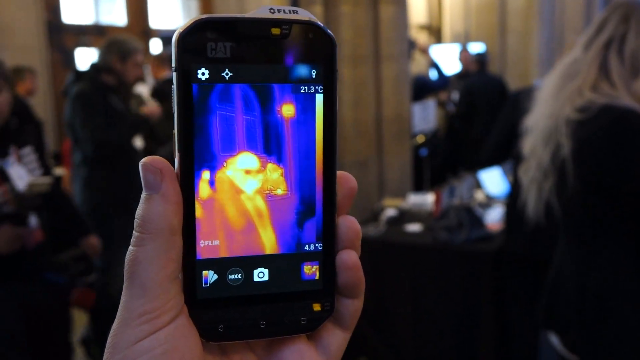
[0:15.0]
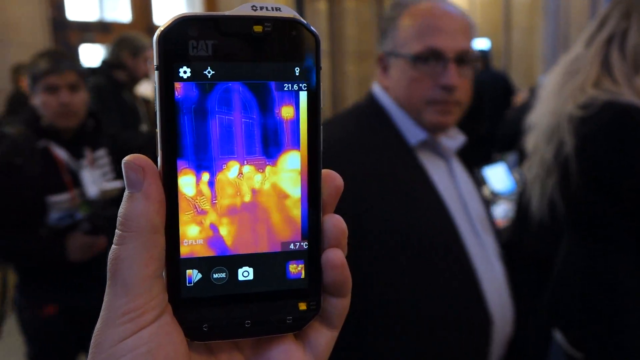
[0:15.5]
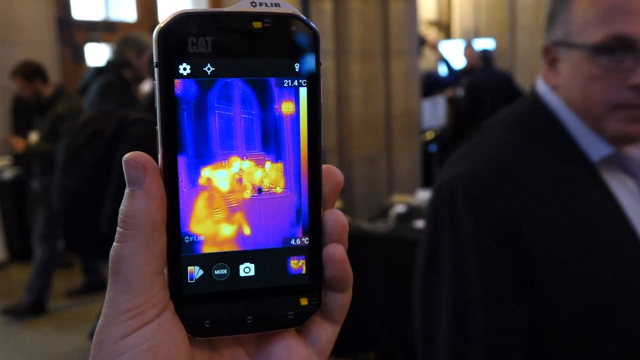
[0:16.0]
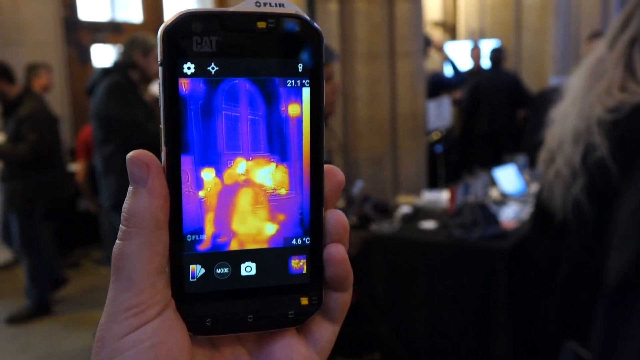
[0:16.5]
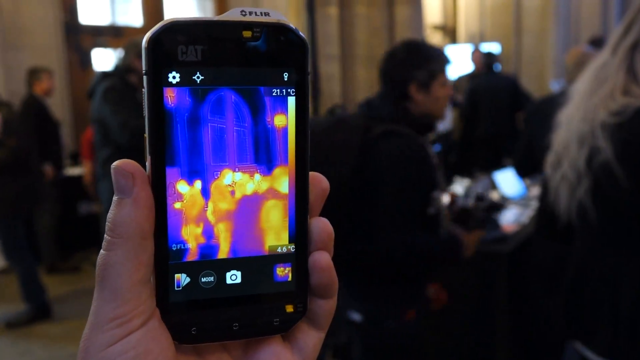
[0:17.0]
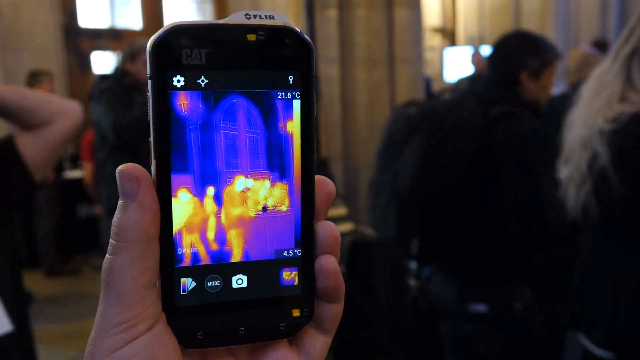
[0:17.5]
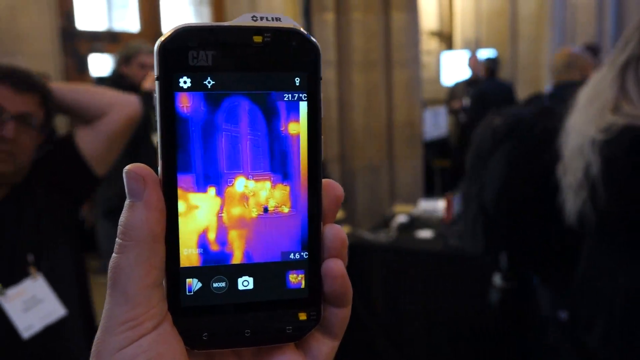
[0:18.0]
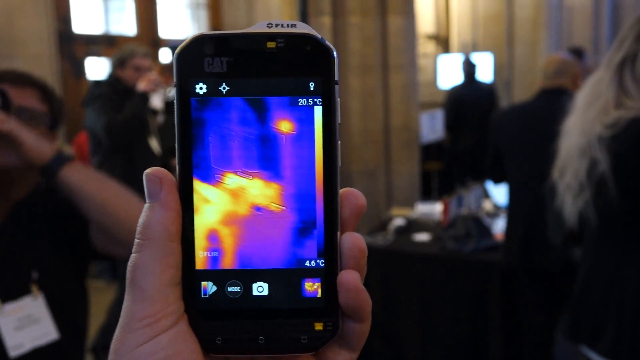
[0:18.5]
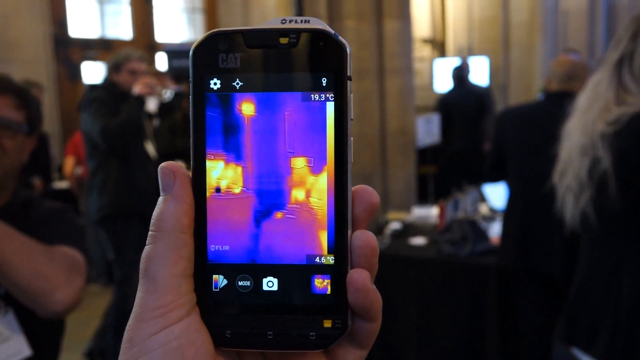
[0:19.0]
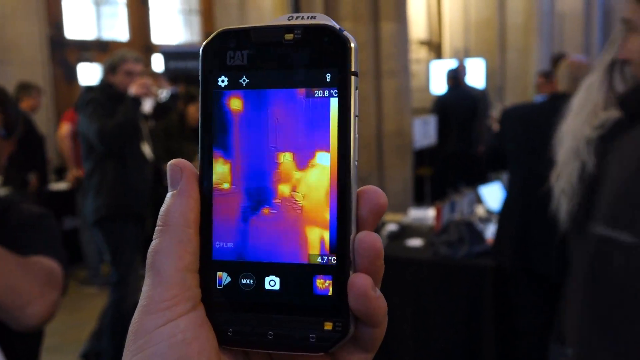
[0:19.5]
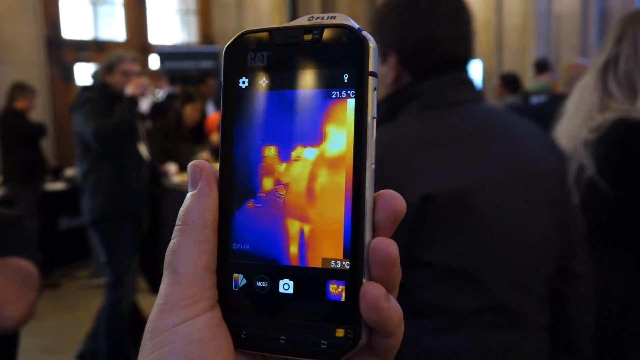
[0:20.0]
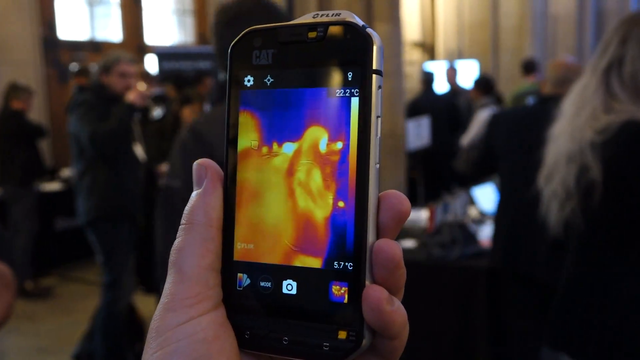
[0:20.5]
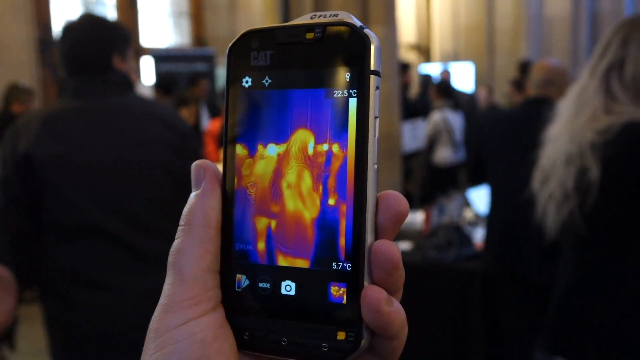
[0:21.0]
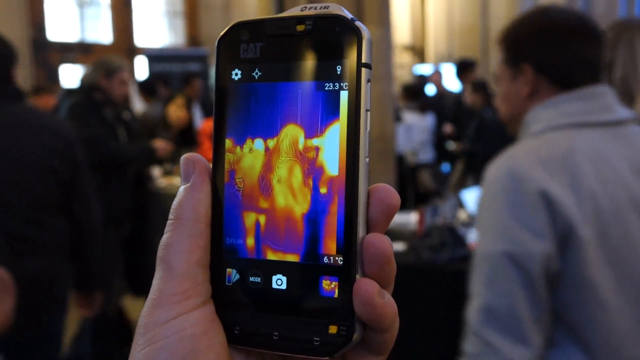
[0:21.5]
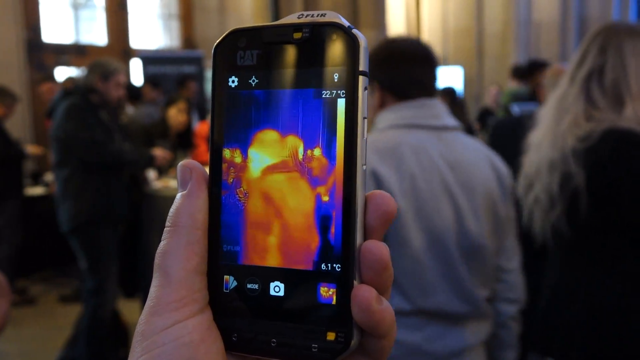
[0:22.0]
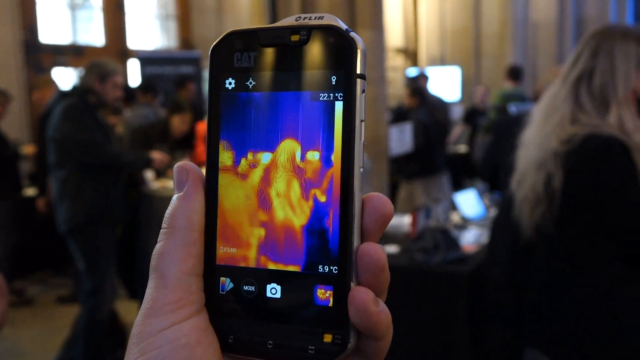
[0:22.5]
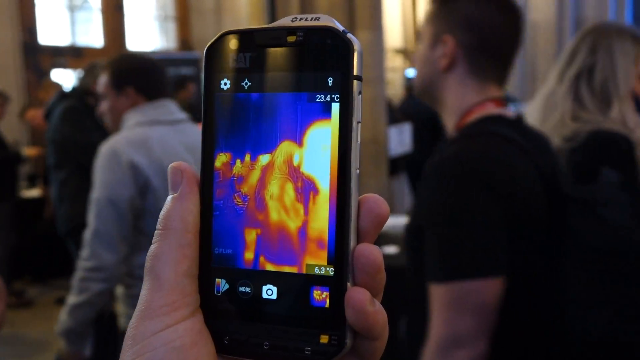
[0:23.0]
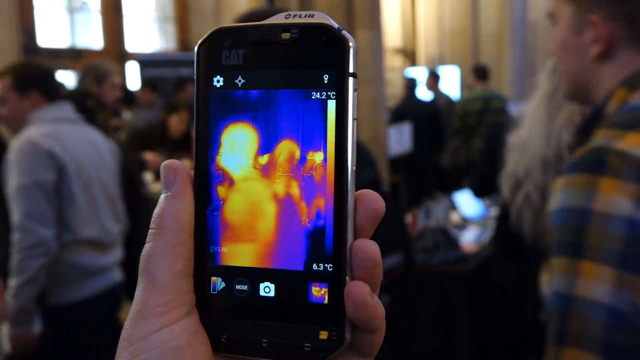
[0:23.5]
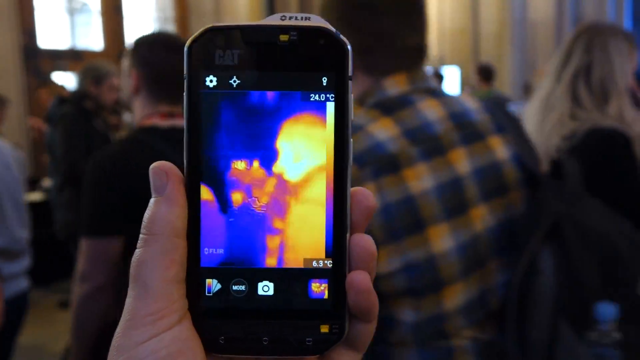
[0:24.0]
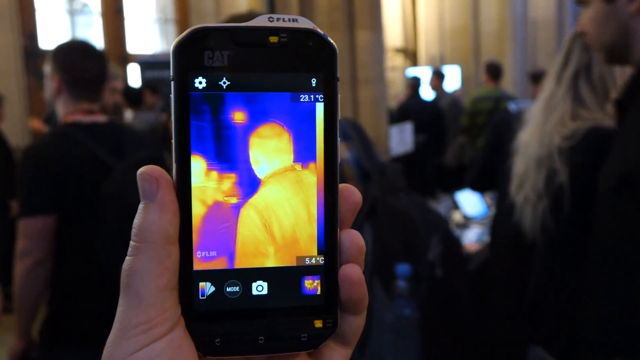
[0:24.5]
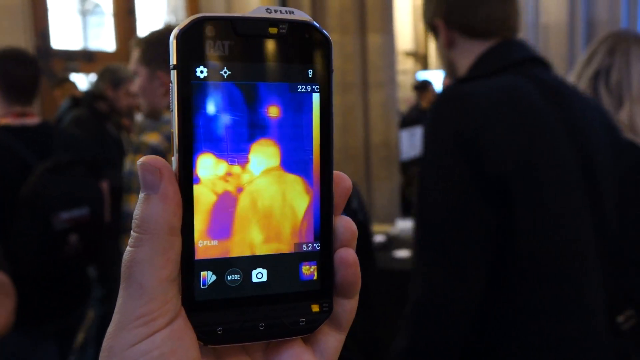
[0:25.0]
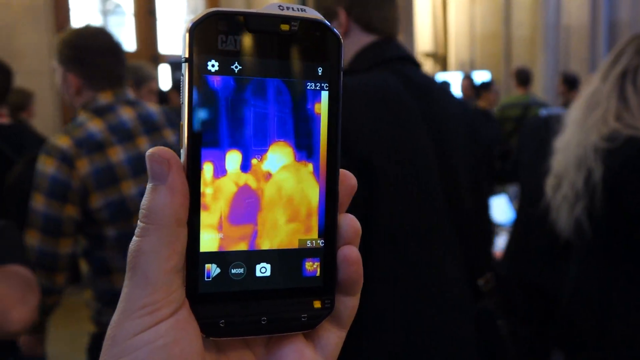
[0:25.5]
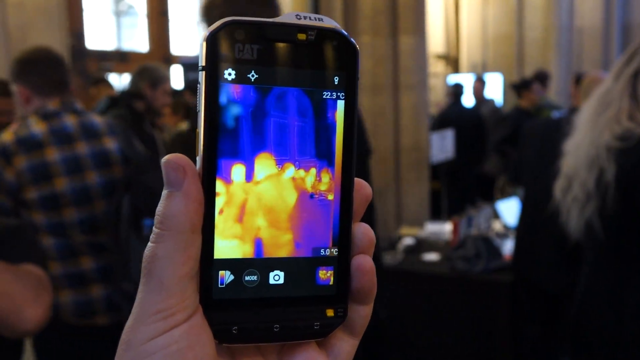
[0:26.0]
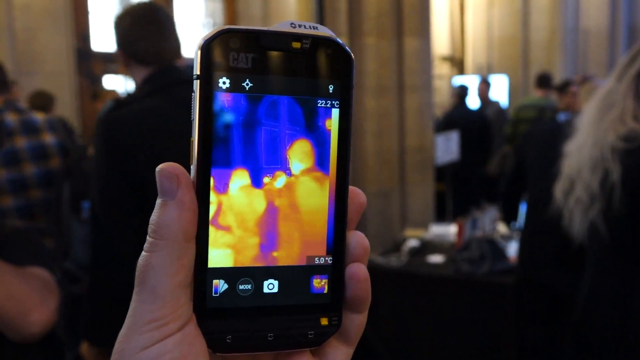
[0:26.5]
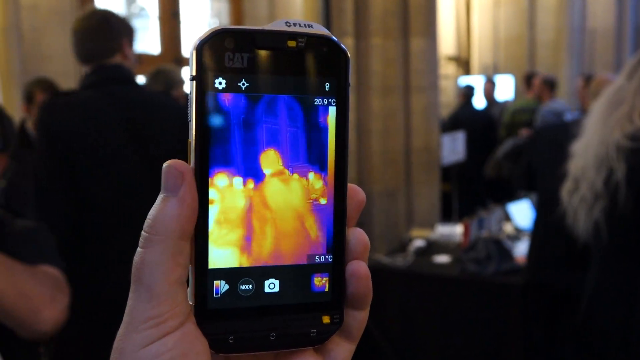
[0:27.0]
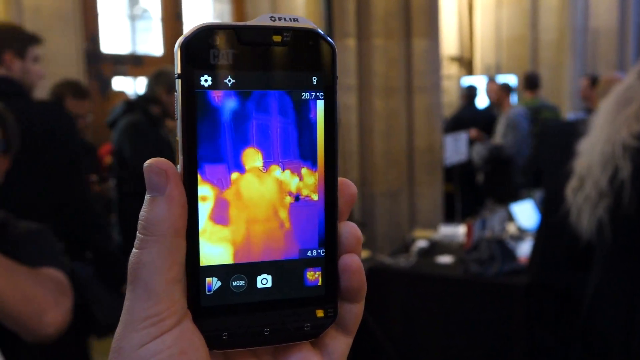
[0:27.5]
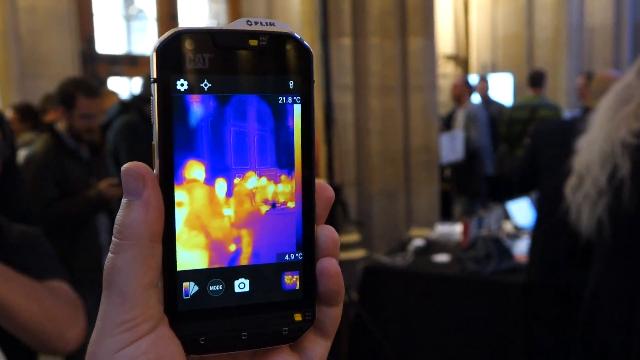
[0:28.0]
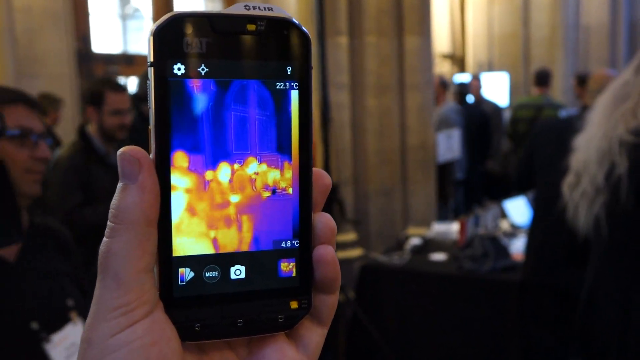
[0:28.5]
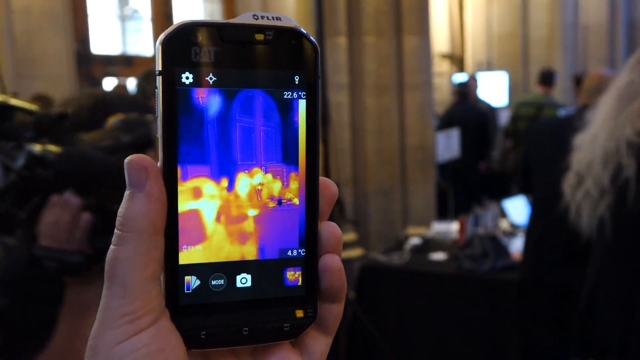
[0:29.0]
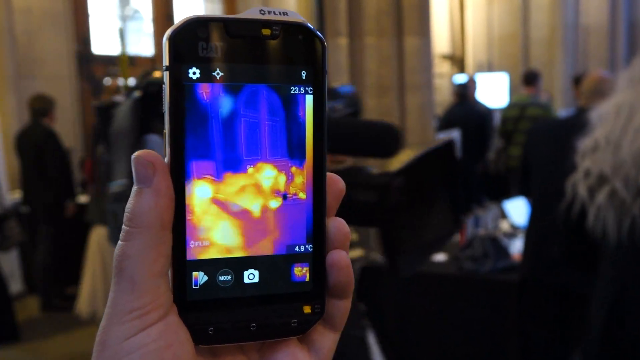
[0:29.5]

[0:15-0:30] The man is still holding the phone as people walk by, some seeming to glance at him as if wondering what he is doing. He holds the phone up, pointed at people in the room, and their bodies show in yellow and reddish tones as they give off heat. A temperature reading at the top says "21.4" degrees Celsius, and the bottom of the screen says "4.6" degrees Celsius. Several icons are at the bottom: a little phone icon, a circle with "mode" in it, and a camera icon, and in the right corner there seems to be a smaller thermal image. He slowly turns the phone toward different people in the crowd, whose bodies pass through in thermal imagery. One man in the background holds a very large, professional-grade camera up on his shoulder, and when he walks past the man holding the phone, the outline of the camera also shows in the thermal image.